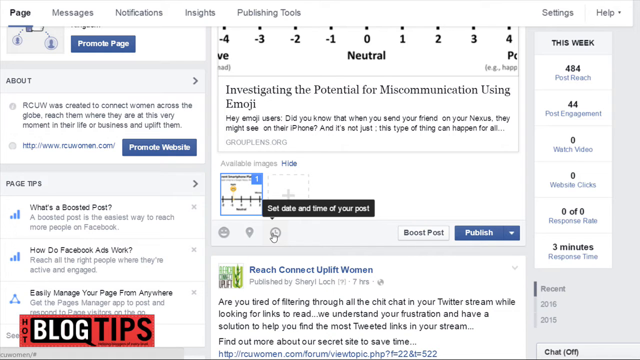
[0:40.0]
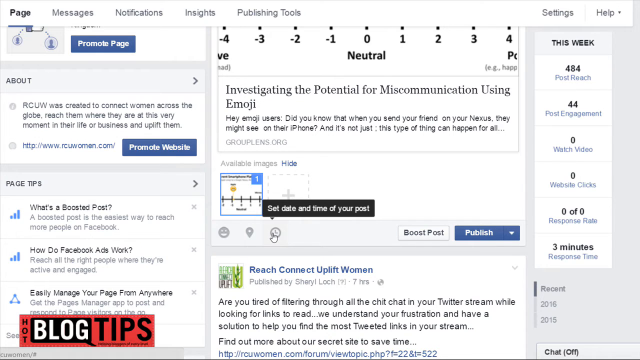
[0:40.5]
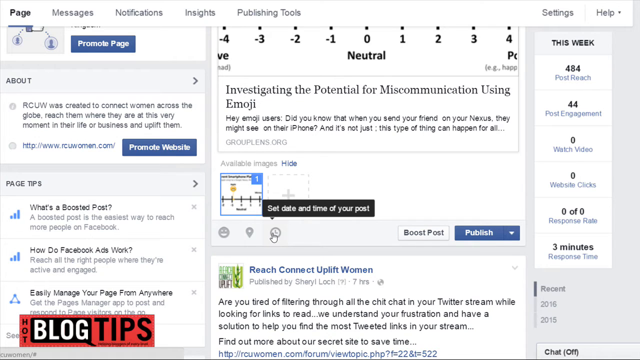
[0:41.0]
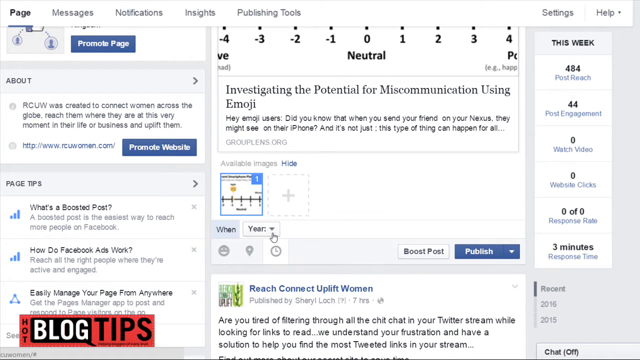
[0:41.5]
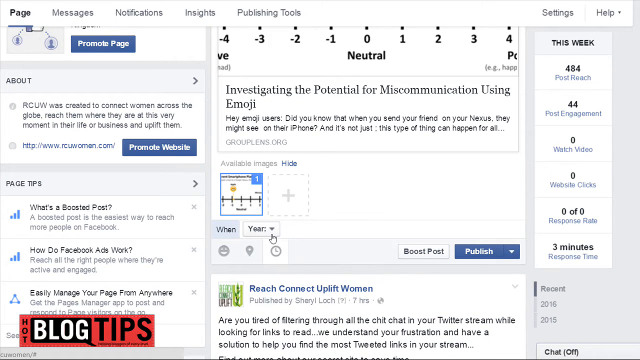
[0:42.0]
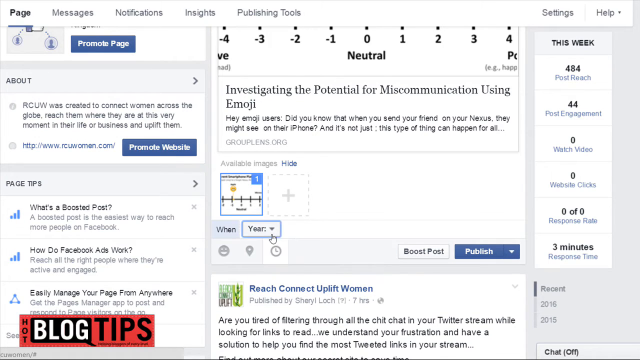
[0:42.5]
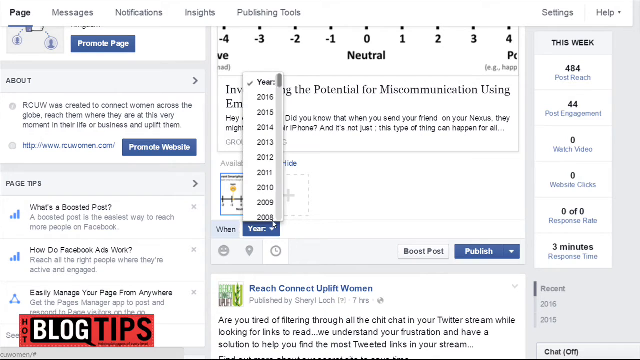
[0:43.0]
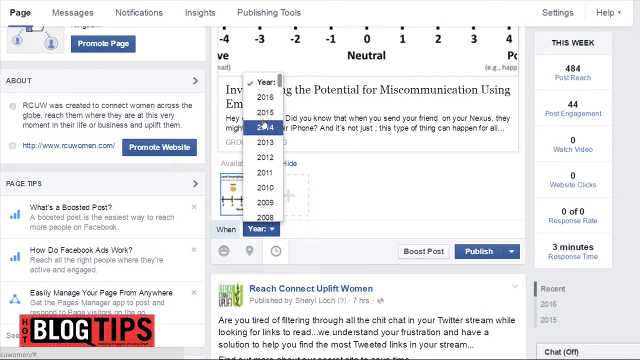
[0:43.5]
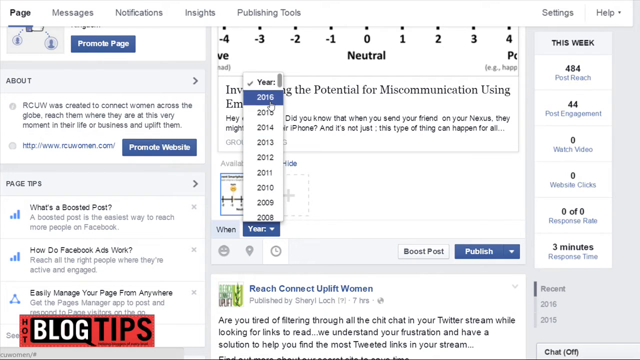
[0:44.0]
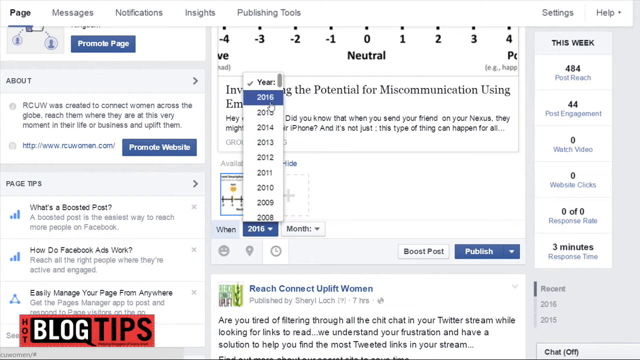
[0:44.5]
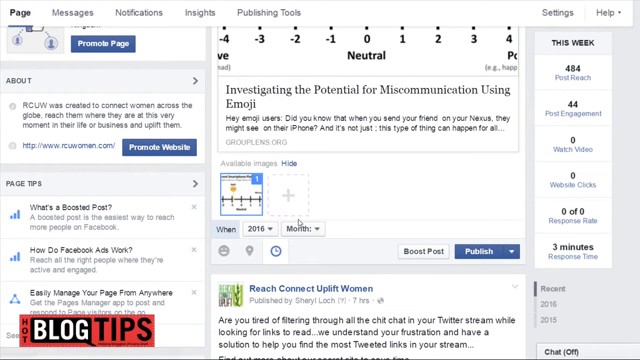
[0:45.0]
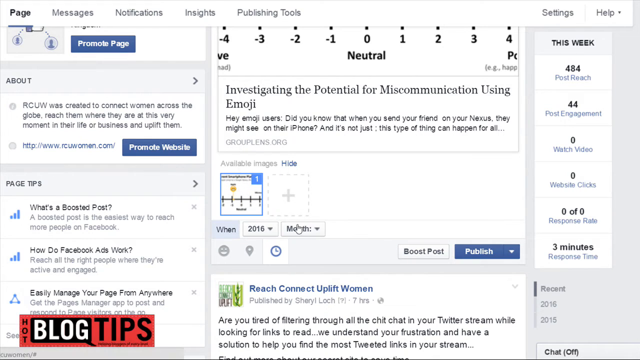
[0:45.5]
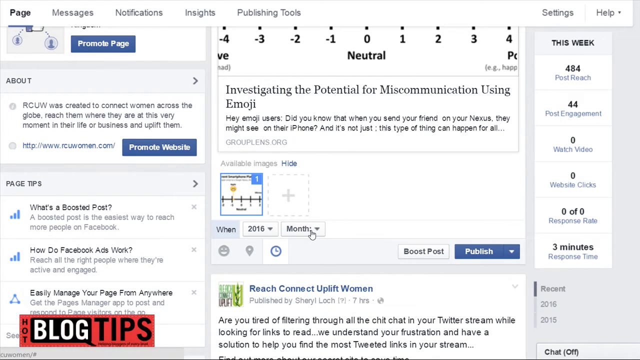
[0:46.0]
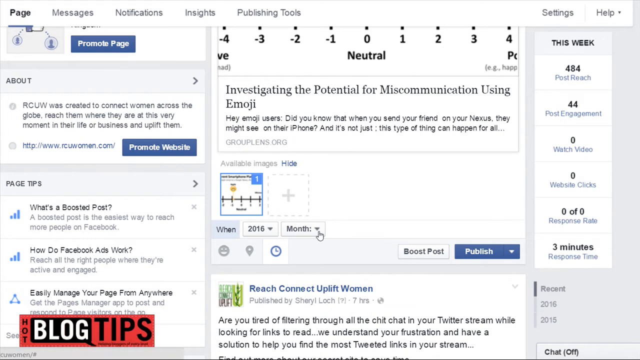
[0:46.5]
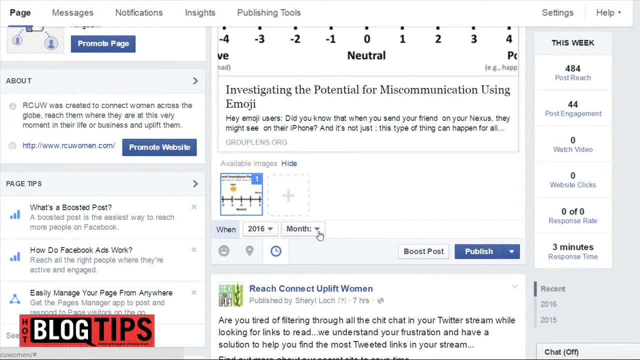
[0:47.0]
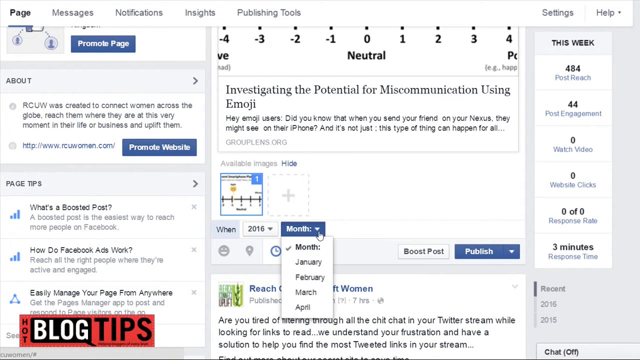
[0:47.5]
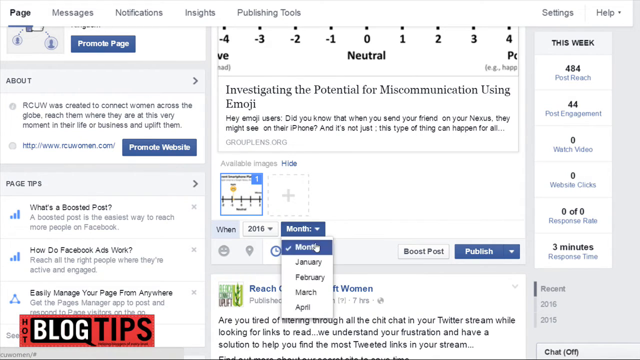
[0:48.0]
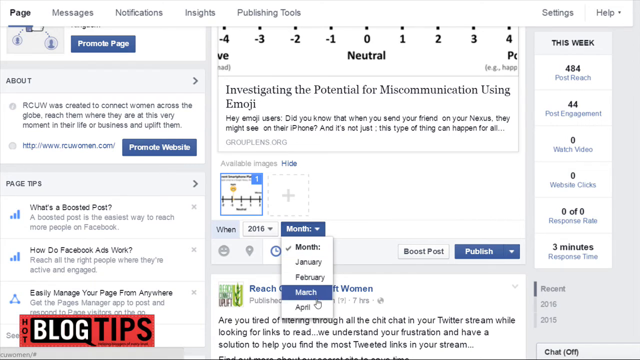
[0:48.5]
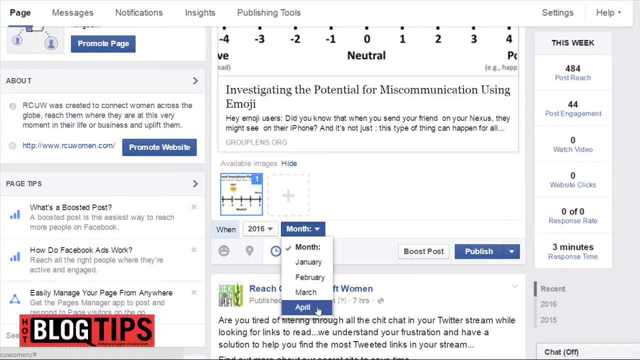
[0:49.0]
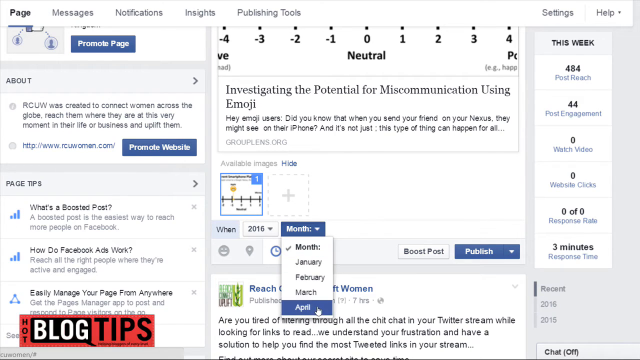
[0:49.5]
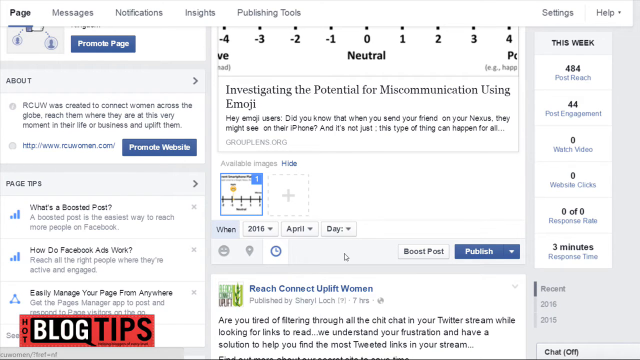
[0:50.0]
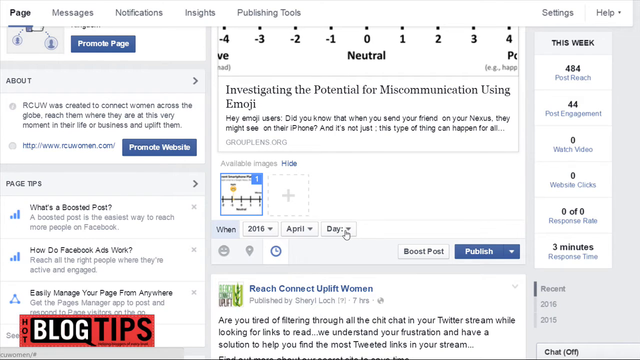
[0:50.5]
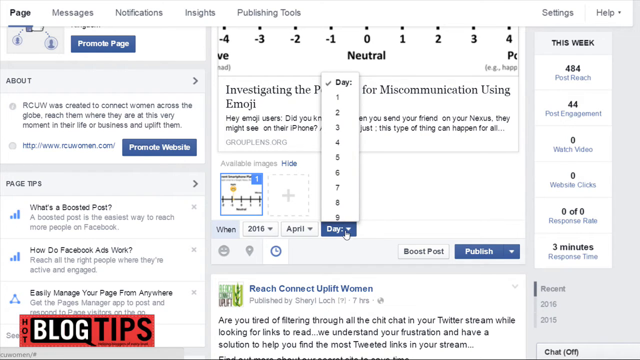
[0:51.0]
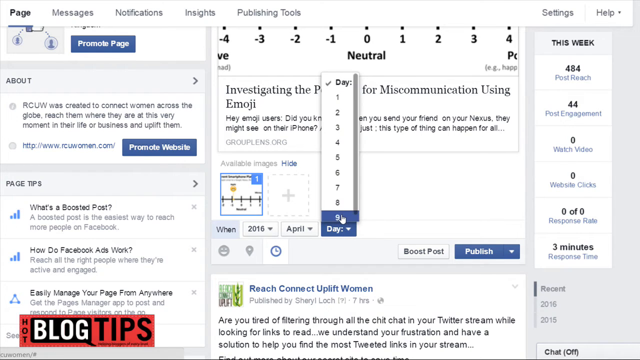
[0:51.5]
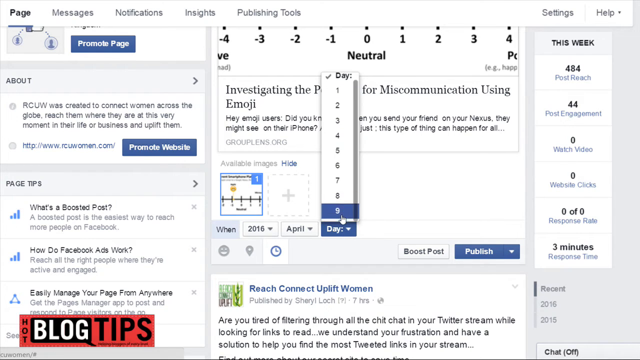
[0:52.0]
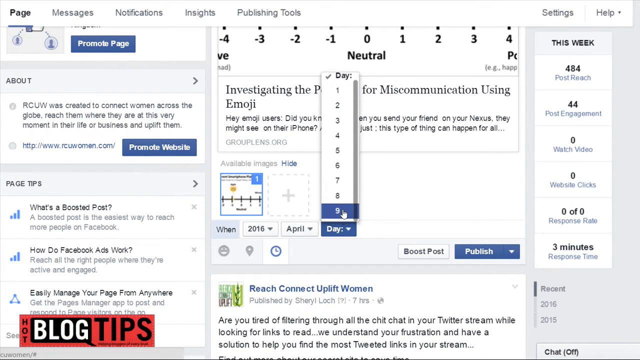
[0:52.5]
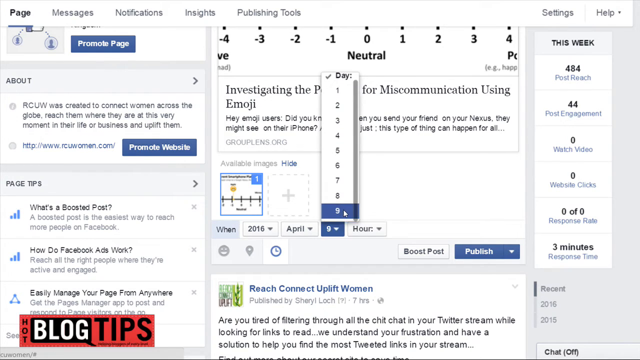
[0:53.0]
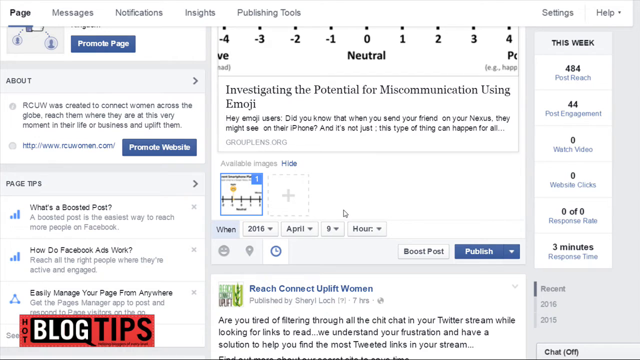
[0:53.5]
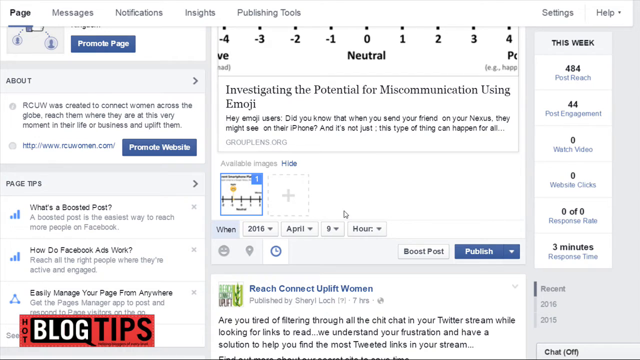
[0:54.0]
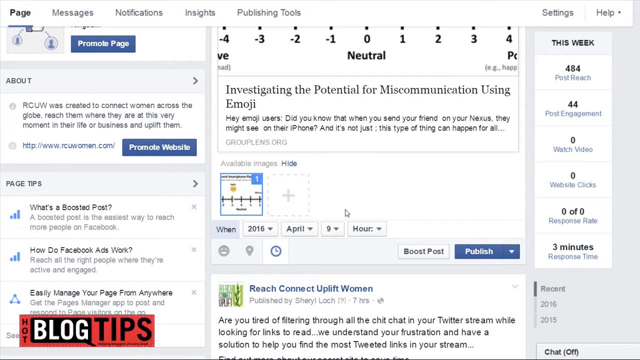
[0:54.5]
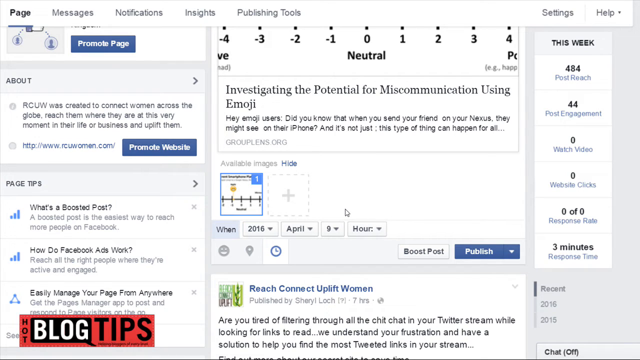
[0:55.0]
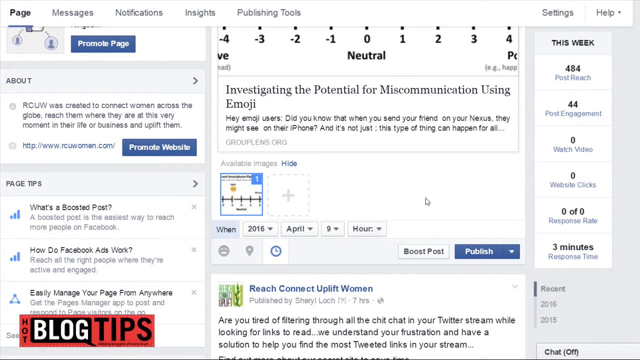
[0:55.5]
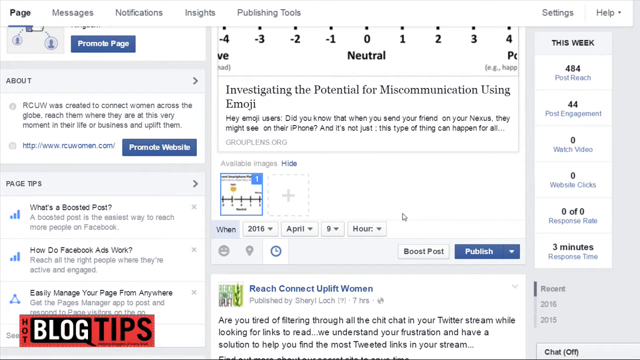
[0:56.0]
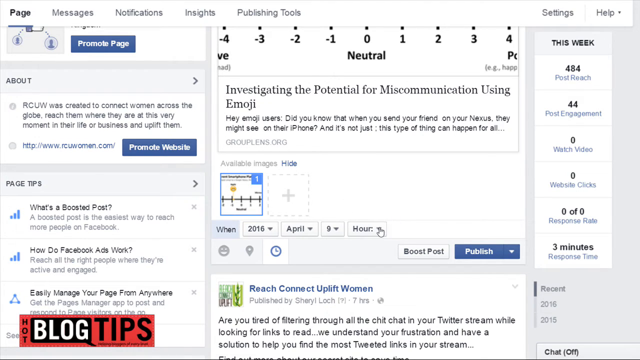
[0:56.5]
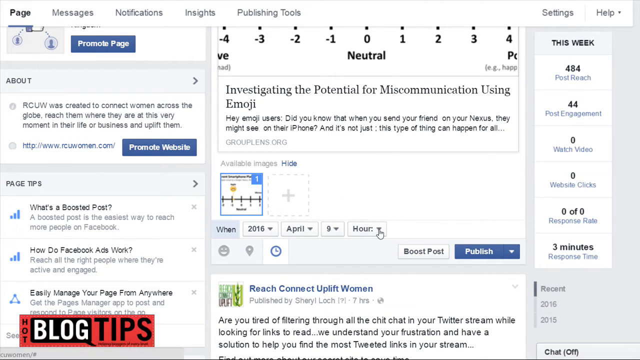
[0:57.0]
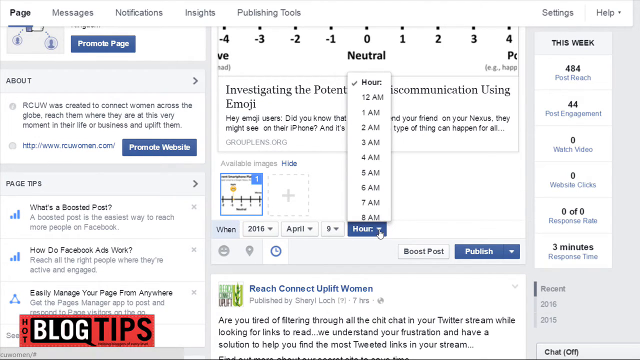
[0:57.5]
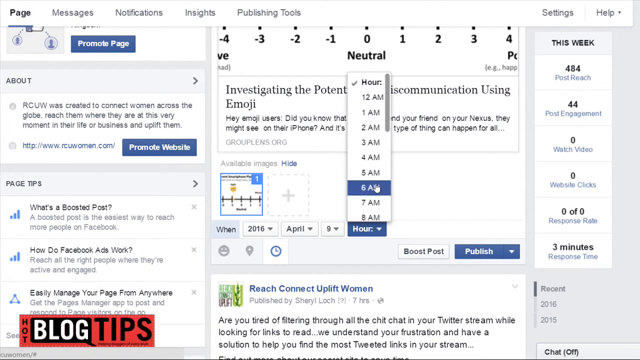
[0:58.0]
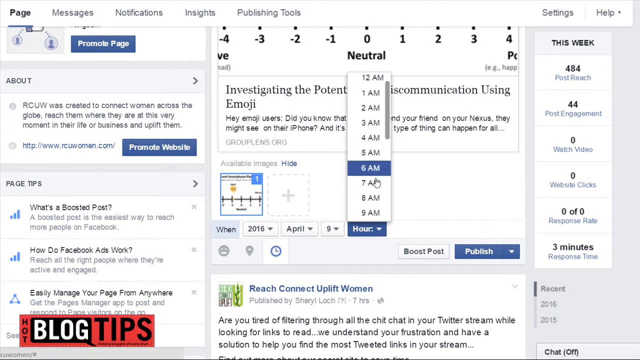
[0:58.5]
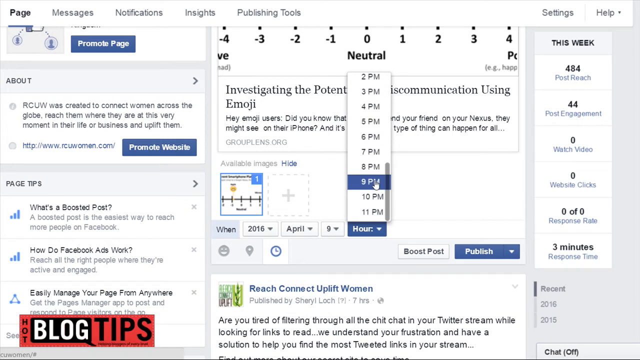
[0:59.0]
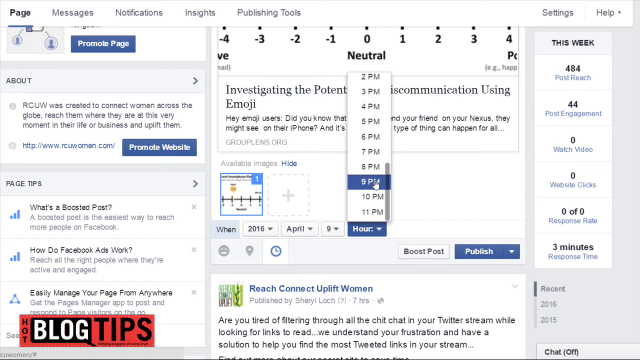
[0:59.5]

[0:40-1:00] The user hovers over what seems to be a little clock to change the time of the post. In the year dropdown they set 2016, select April as the month and the 9th as the day, then click the hour dropdown and select 7 p.m. Underneath are options to boost the post or publish the post. Below that is what seems to be a separate post from a different day, which also says "reach, connect, uplift women" and then "are you tired of filtering through all the chit-chat in your Twitter stream while looking for links to read", followed by more detail. On the right side, a different section says "this week" and lists "484 post reach, 44 post engagements, zero watch videos, zero website clicks", with more information below.